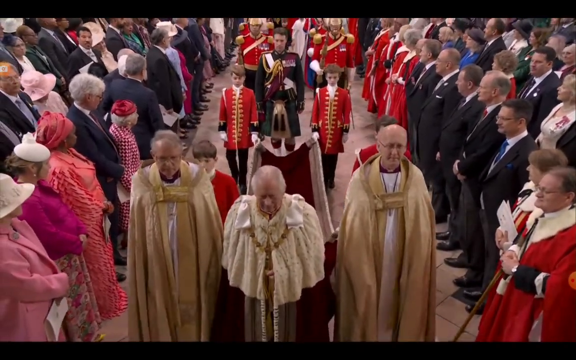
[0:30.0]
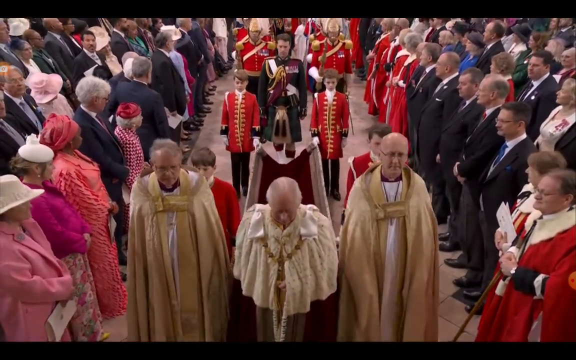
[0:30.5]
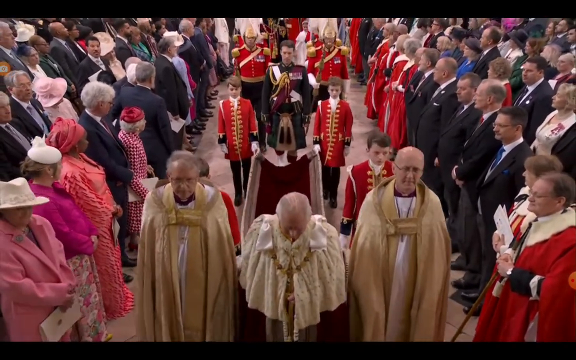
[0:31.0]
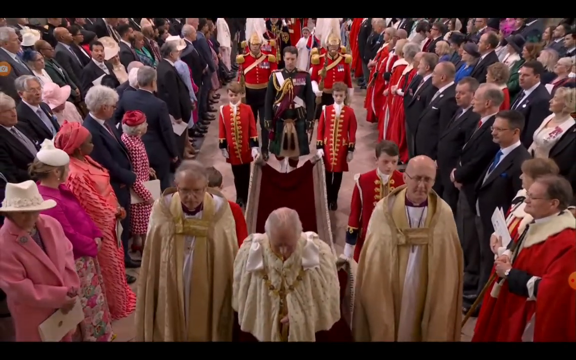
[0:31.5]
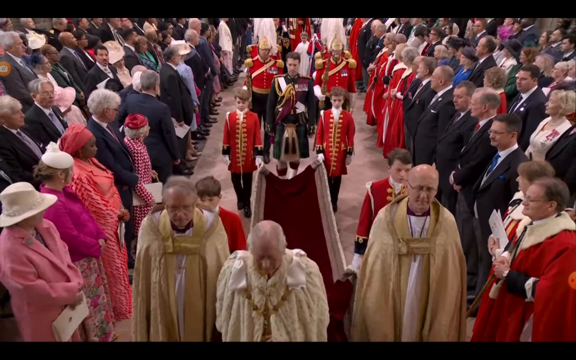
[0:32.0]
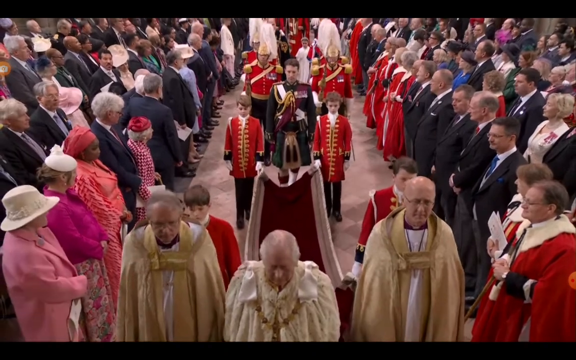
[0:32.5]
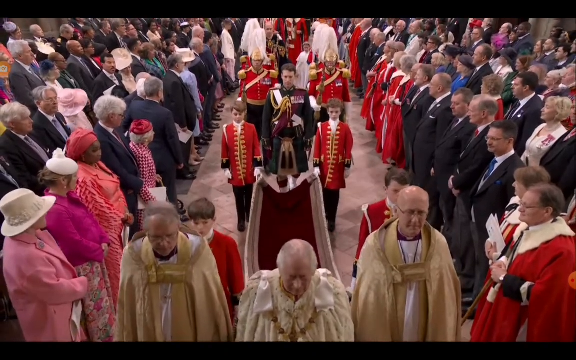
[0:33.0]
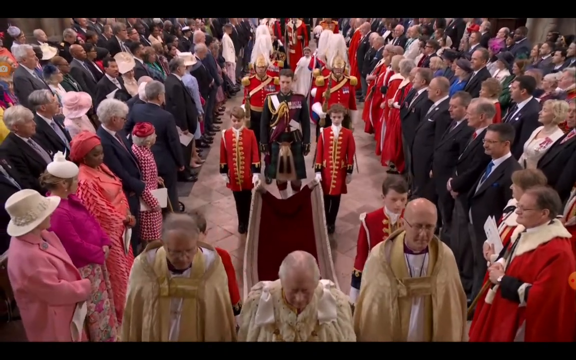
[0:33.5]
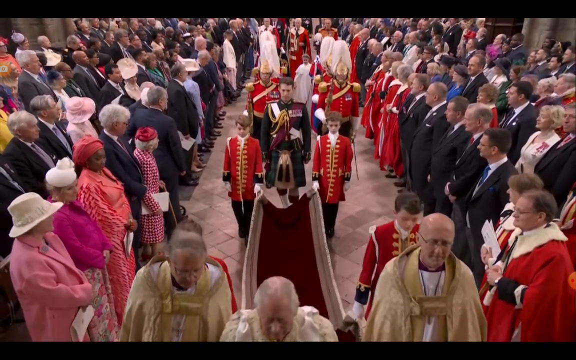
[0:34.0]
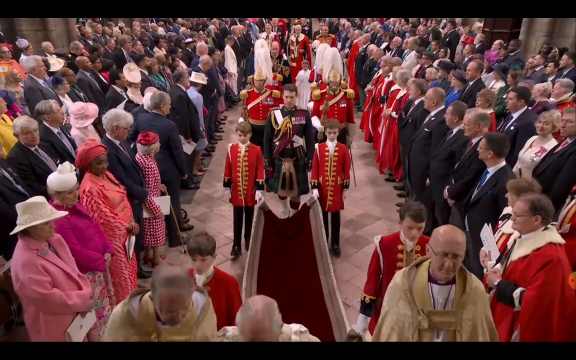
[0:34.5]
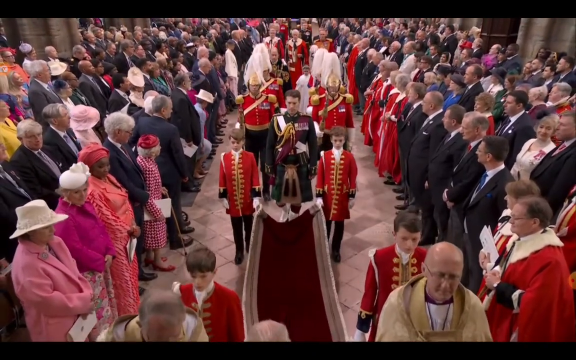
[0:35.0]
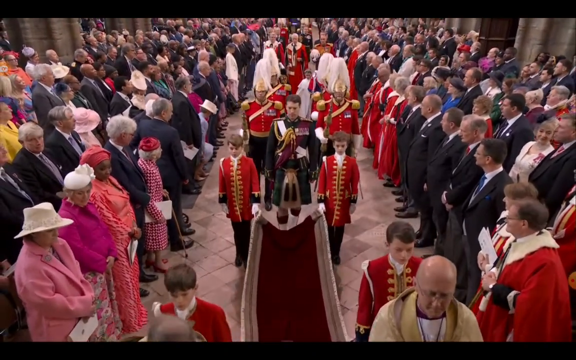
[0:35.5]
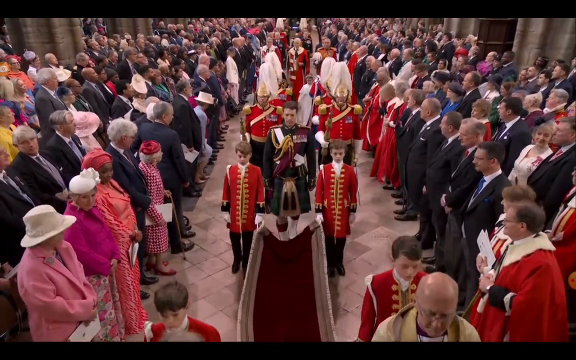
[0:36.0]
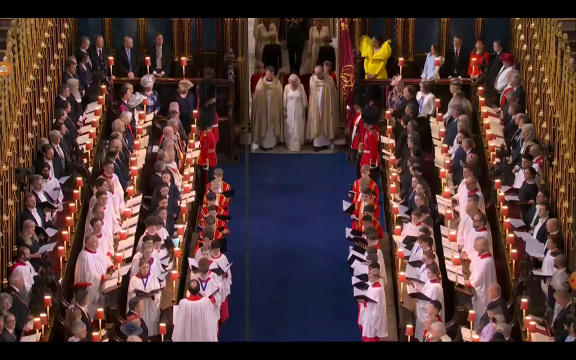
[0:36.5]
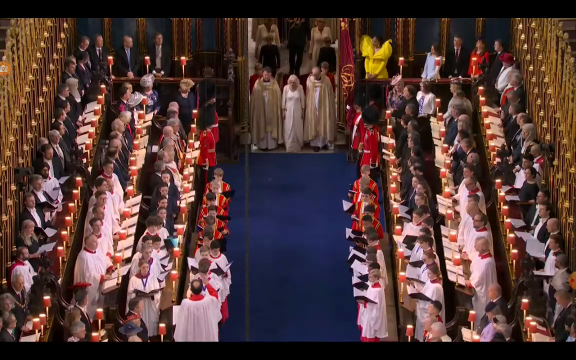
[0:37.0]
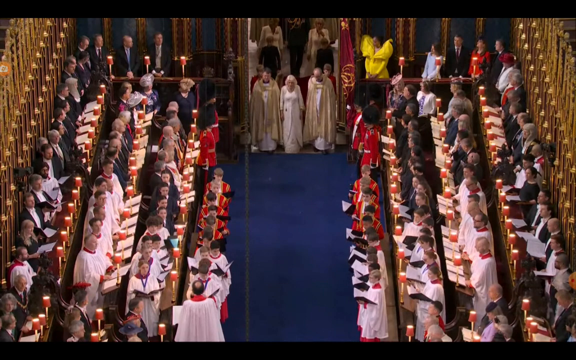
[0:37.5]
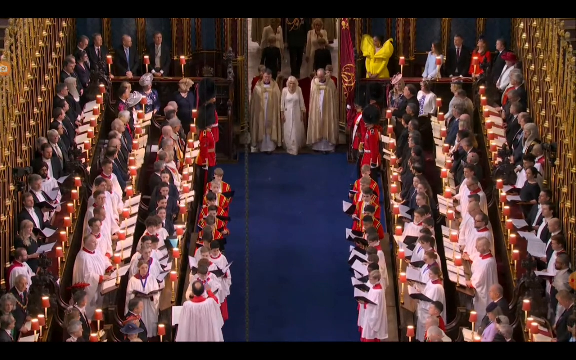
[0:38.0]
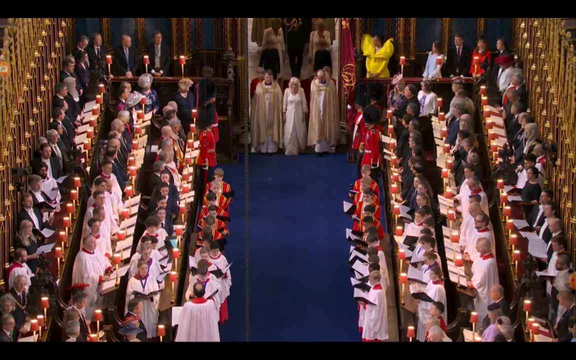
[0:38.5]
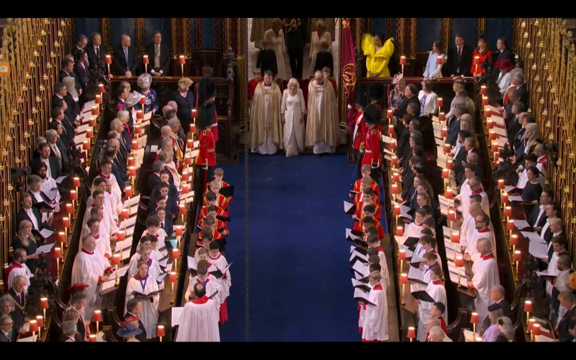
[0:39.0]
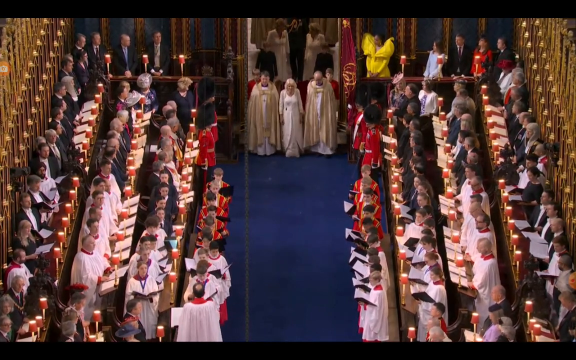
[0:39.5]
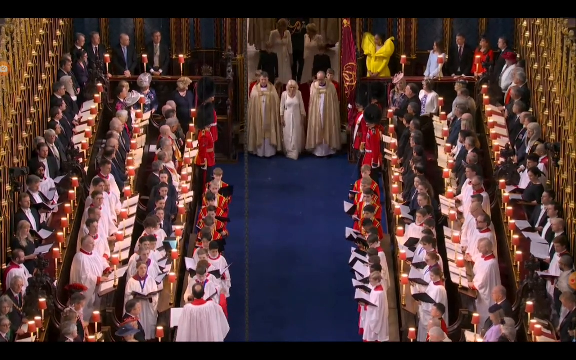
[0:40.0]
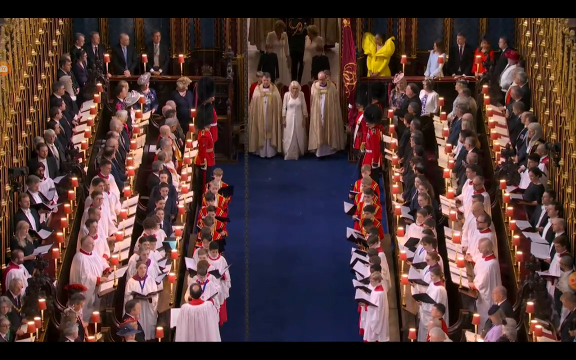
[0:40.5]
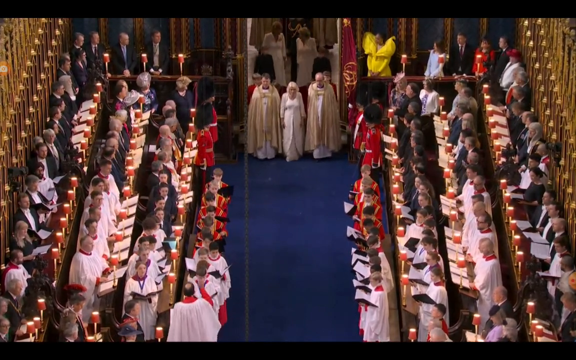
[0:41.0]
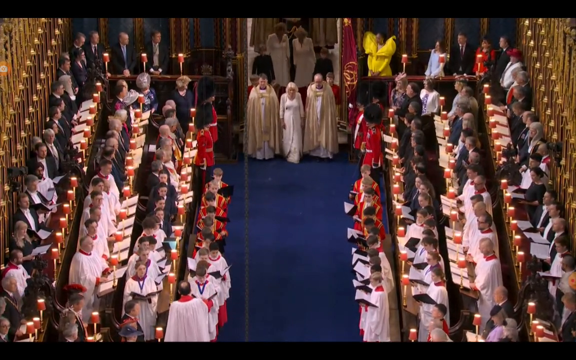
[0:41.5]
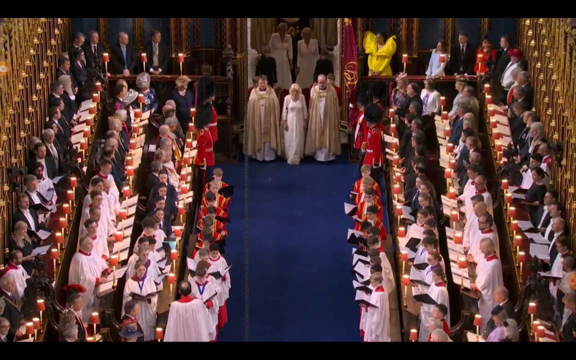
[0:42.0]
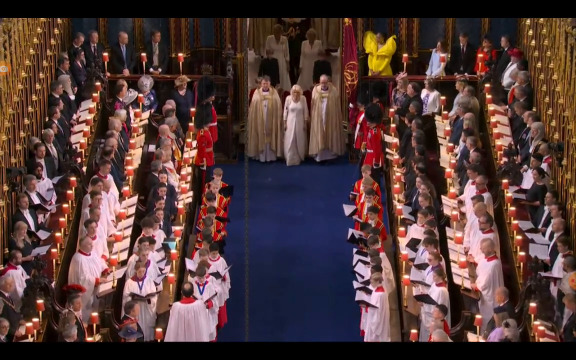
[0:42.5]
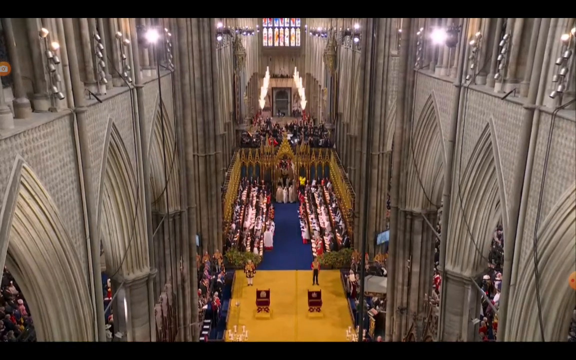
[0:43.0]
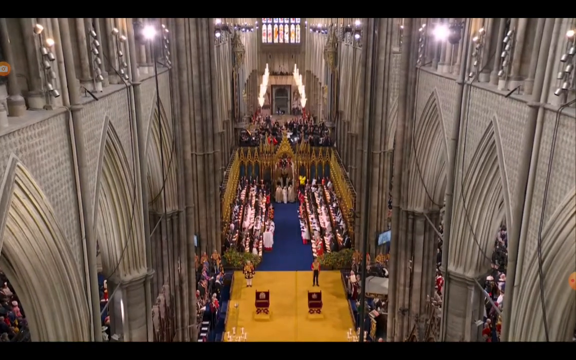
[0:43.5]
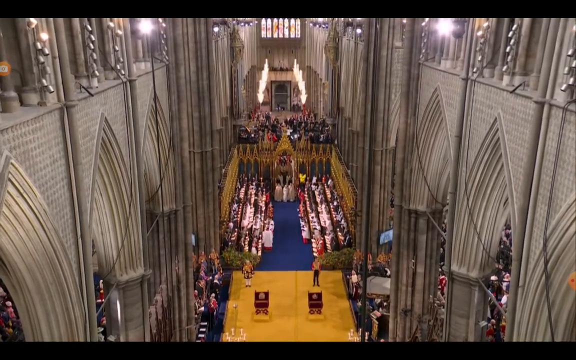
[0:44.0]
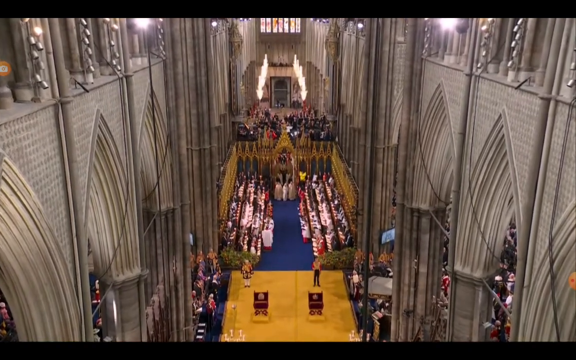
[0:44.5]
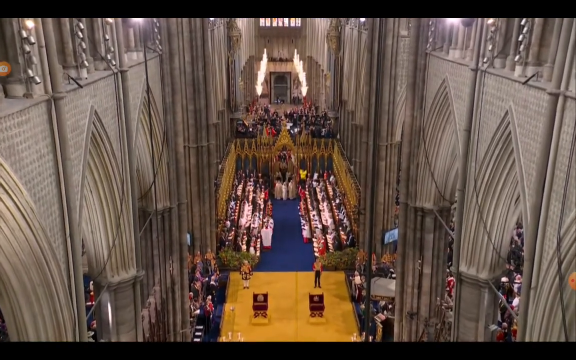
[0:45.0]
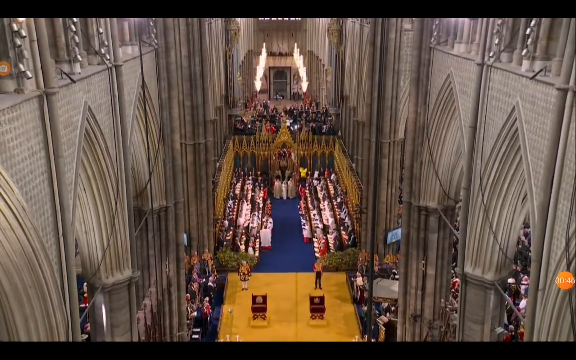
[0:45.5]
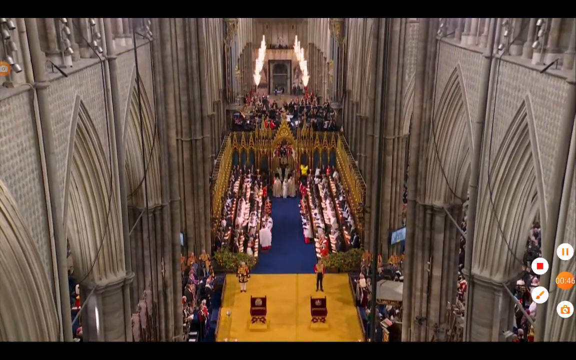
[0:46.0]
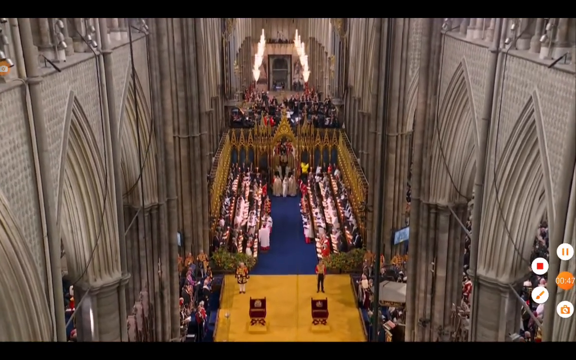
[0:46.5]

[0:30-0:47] The procession of Prince Charles continues down the aisle of the cathedral, and aerial shots show what is going on down below. Prince Charles wears a sort of cloak that reaches only midway down his arms. On each side of him are probably archbishops of the Church of England. Two young boys dressed in red and gold carry the end of his robe so that it proceeds nicely down the aisle. The cathedral is packed; on both the left and the right, women and men are finely dressed, the men all in suits and the women mostly wearing hats. Toward the back of the procession are several men in red uniforms; it is unclear whether they are soldiers. They walk in good form rather than marching. Prince Charles looks very somber.